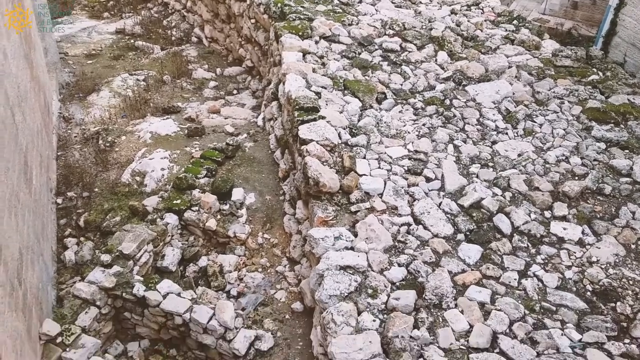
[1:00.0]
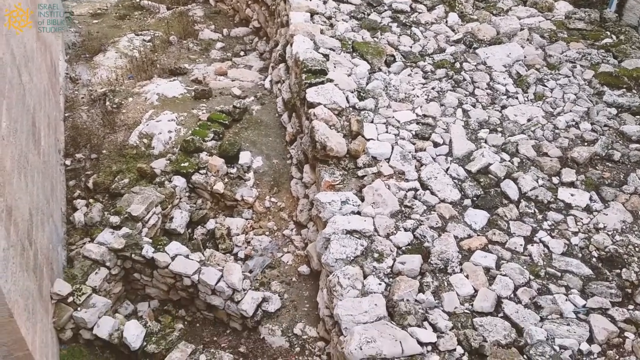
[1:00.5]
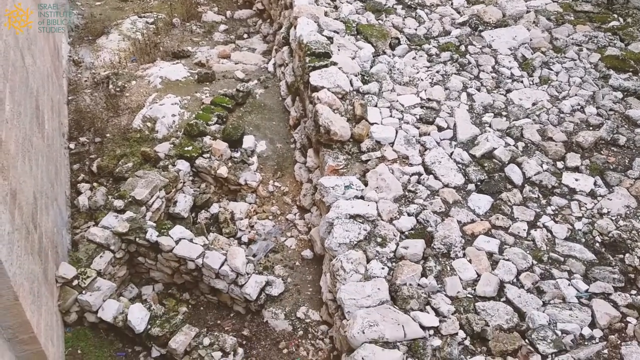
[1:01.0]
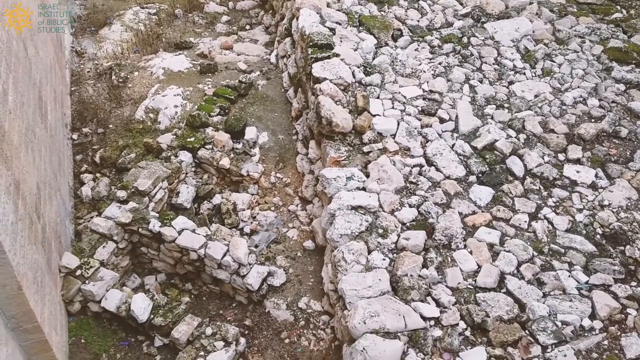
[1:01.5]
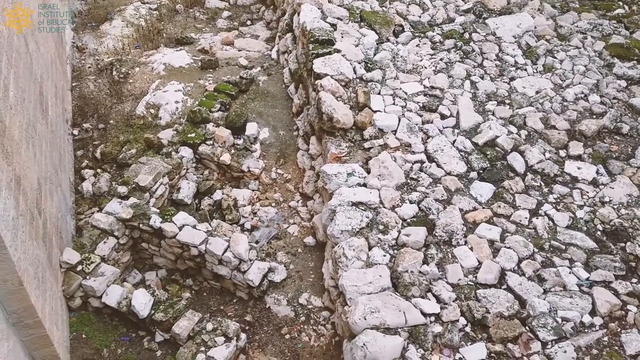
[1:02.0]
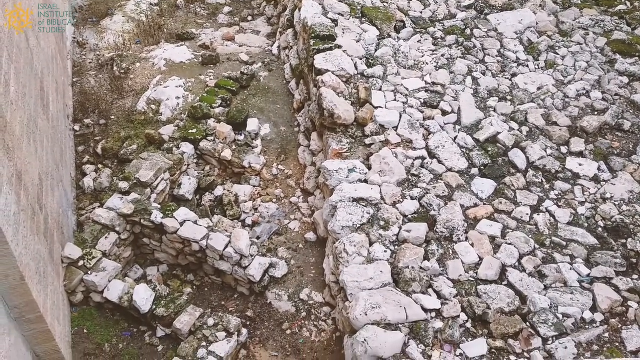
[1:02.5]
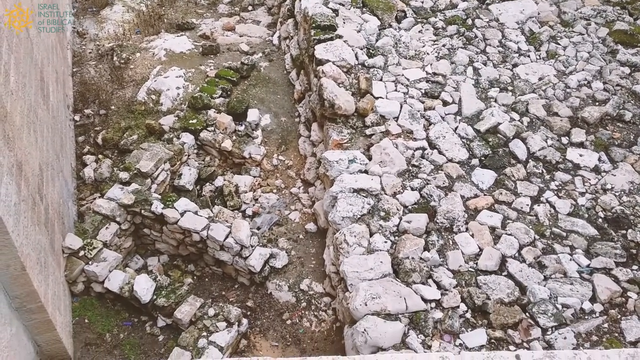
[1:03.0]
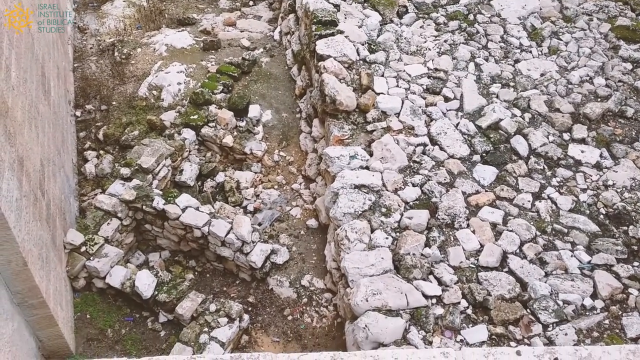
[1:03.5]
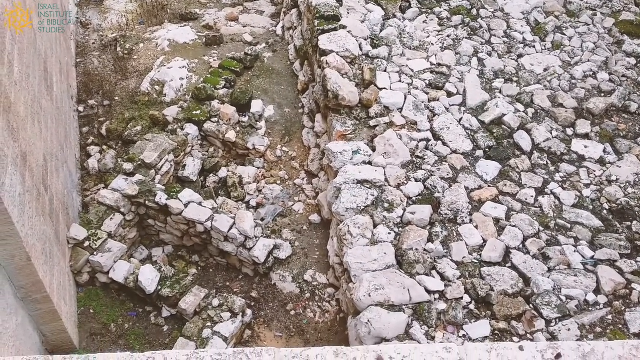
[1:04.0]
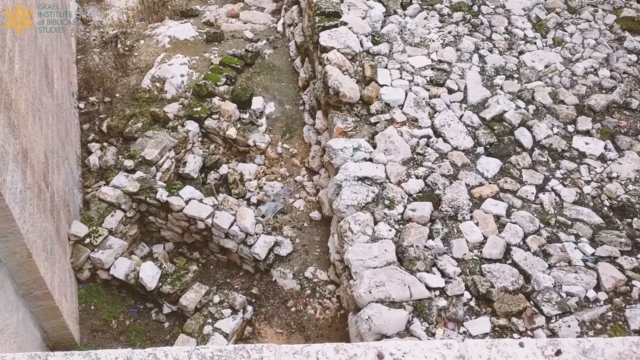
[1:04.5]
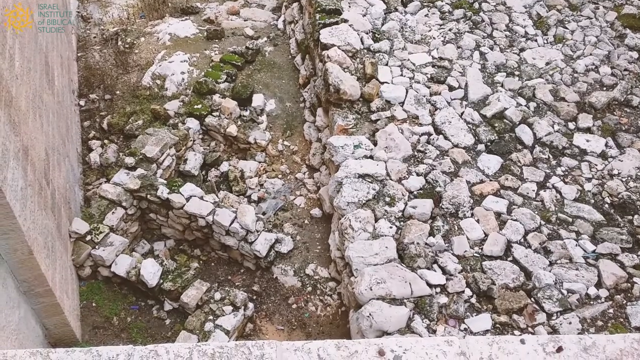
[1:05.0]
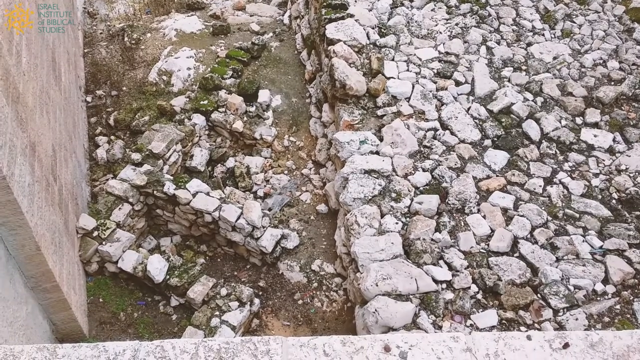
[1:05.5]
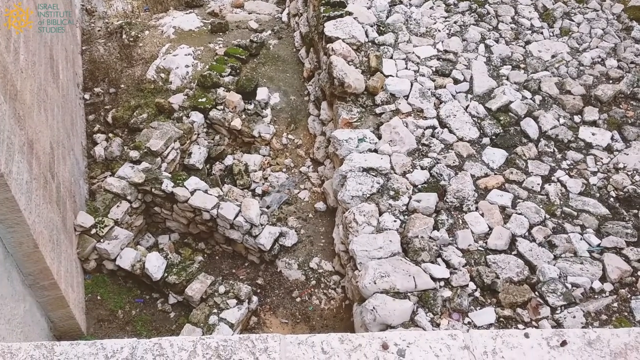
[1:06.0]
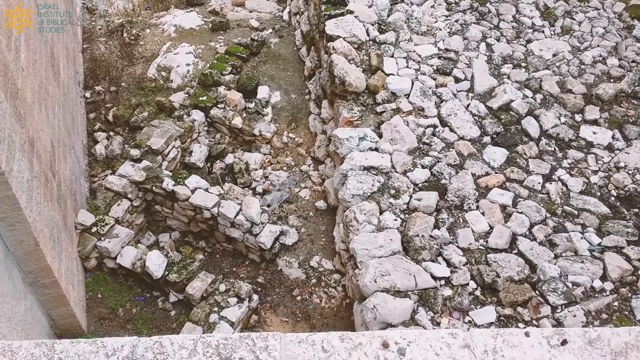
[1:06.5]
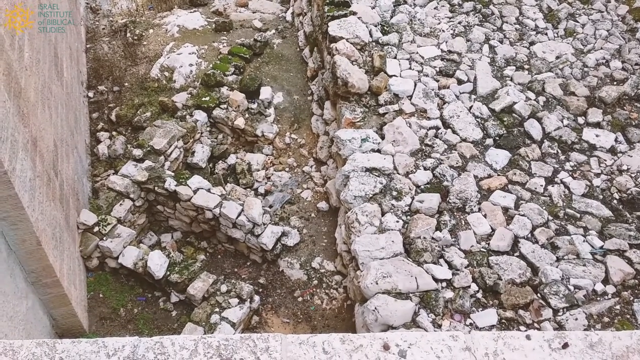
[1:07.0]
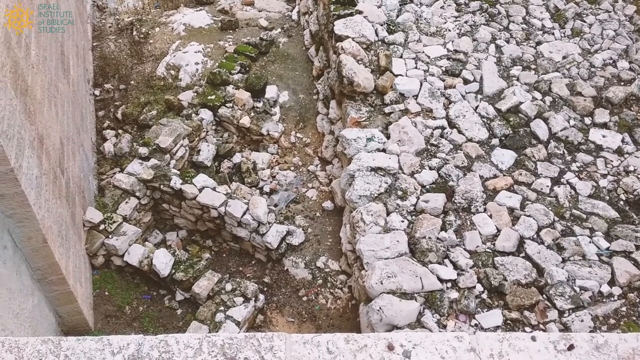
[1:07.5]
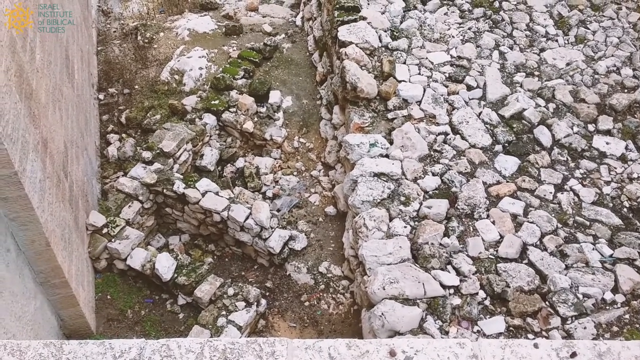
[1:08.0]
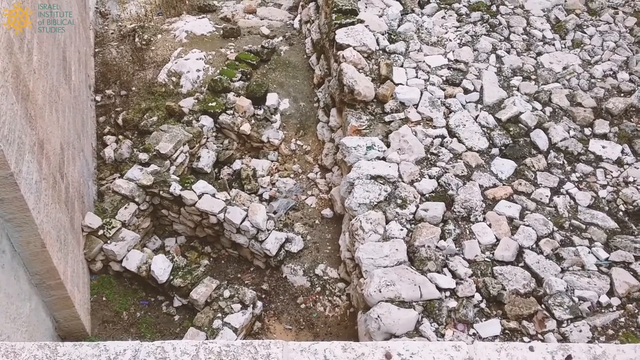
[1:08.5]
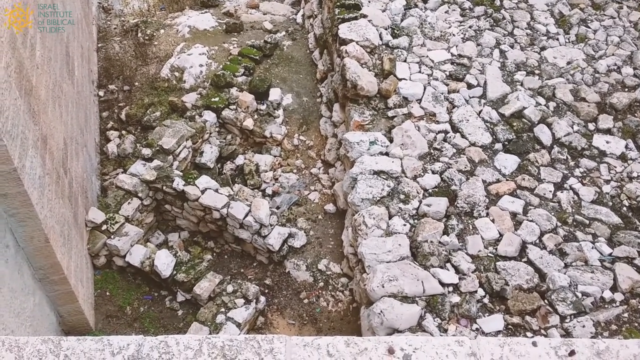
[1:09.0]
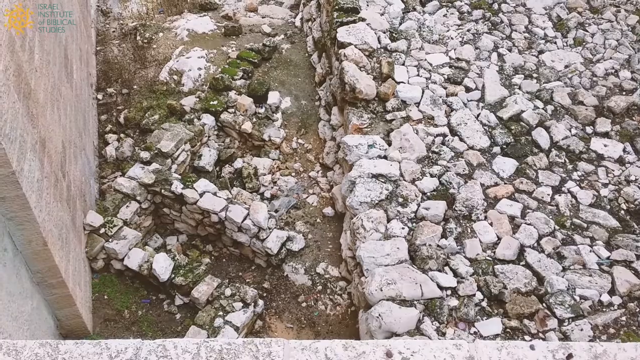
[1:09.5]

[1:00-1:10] The stone at the bottom of the overpass and at the bottom of the staircase is shown, making the area look messy. It looks like it could be outside an apartment building, possibly an office building. The stone might be left over from some sort of construction project that probably happened decades ago. It looks like a raised bed area with some grass growing in between the stones.